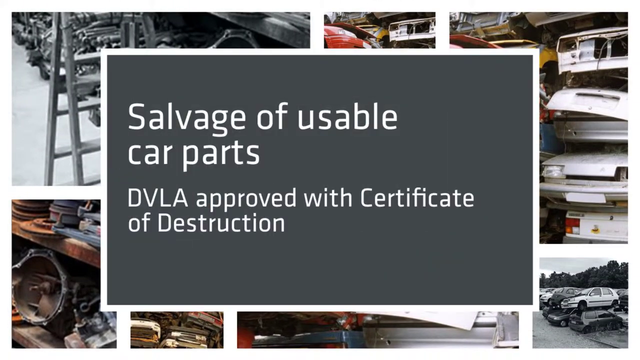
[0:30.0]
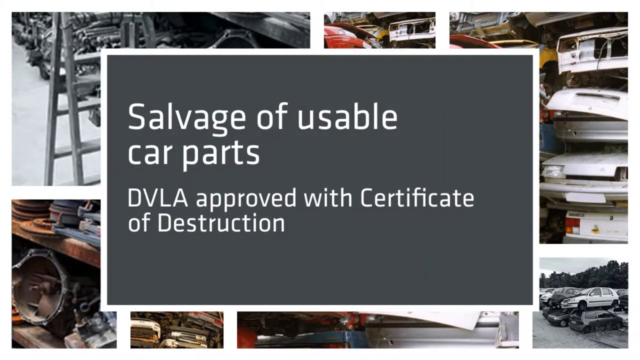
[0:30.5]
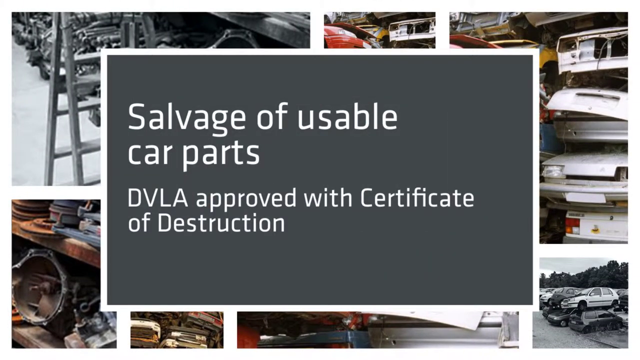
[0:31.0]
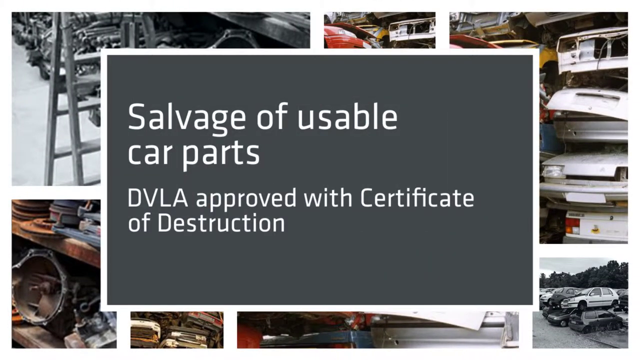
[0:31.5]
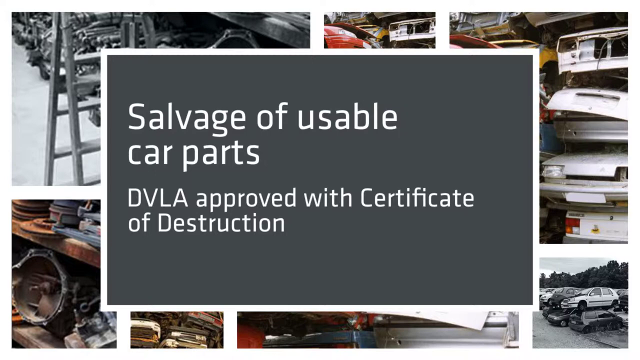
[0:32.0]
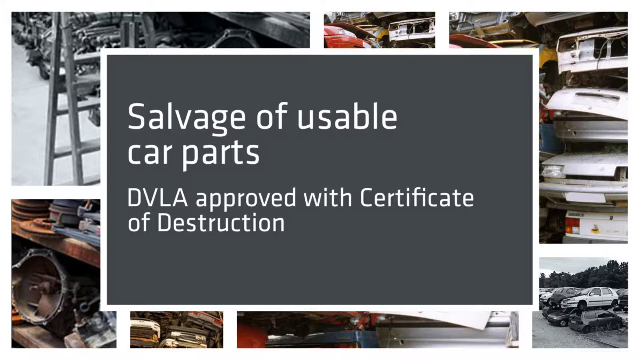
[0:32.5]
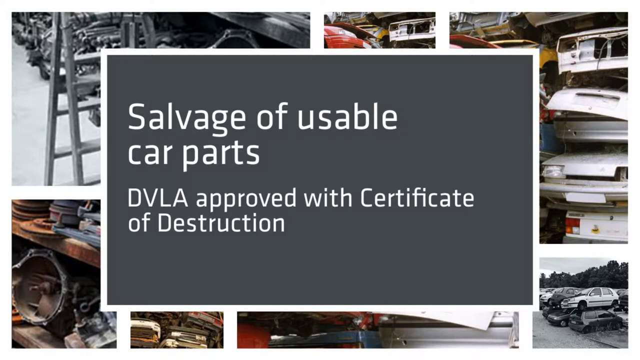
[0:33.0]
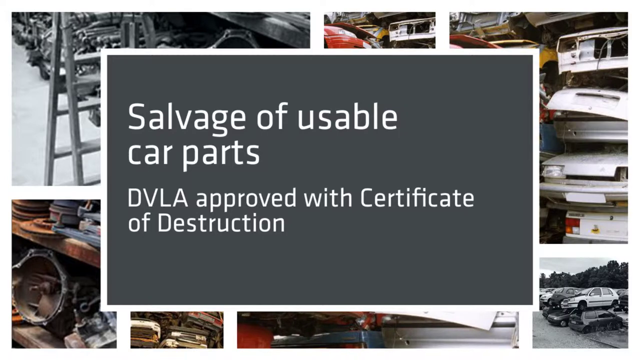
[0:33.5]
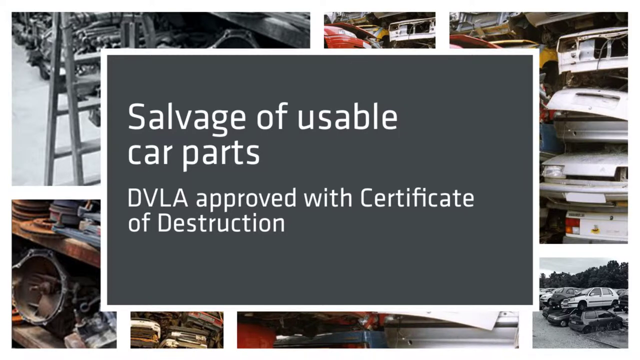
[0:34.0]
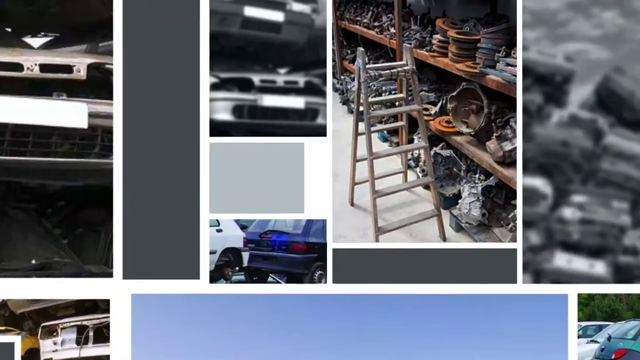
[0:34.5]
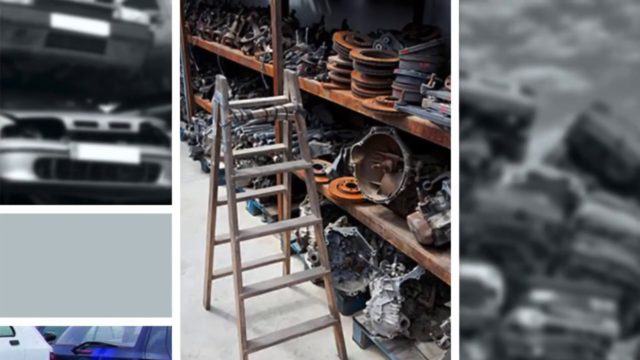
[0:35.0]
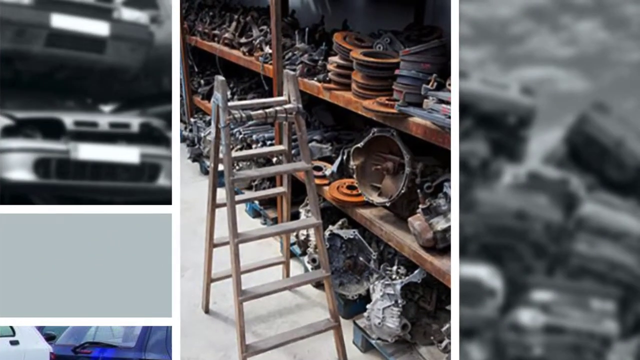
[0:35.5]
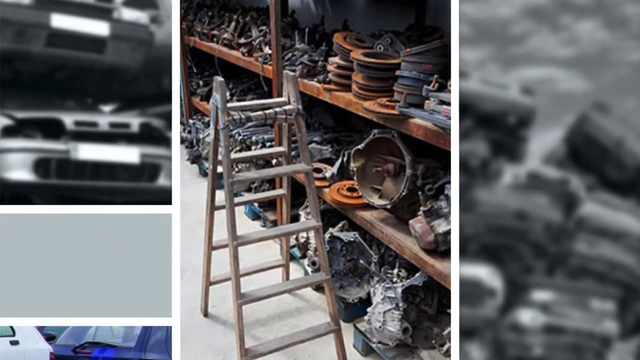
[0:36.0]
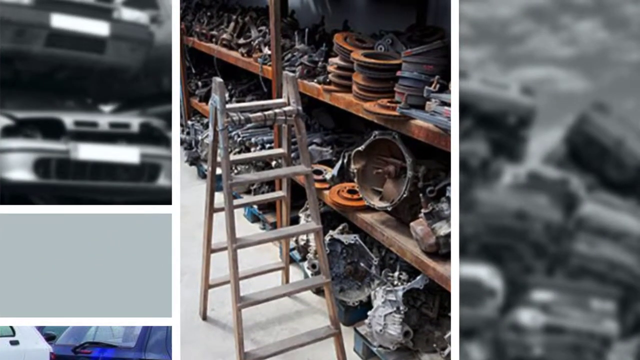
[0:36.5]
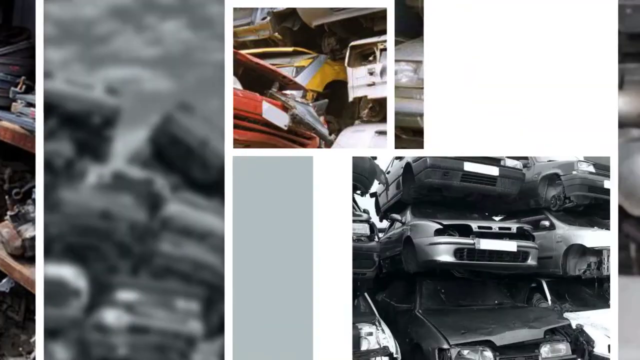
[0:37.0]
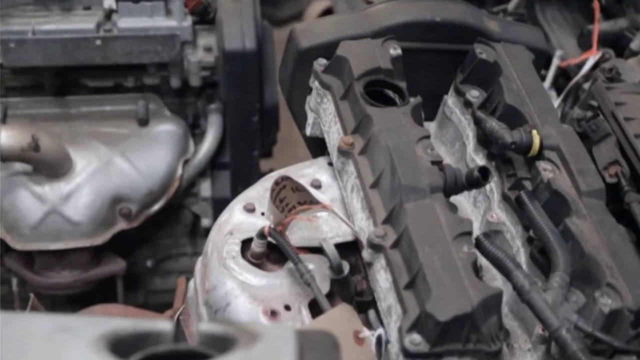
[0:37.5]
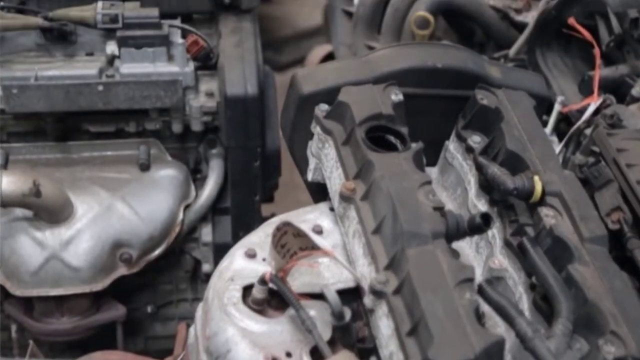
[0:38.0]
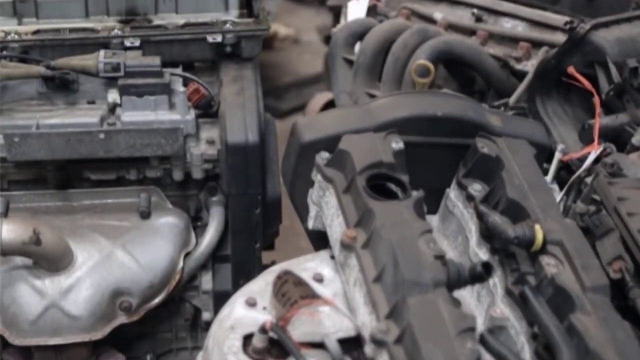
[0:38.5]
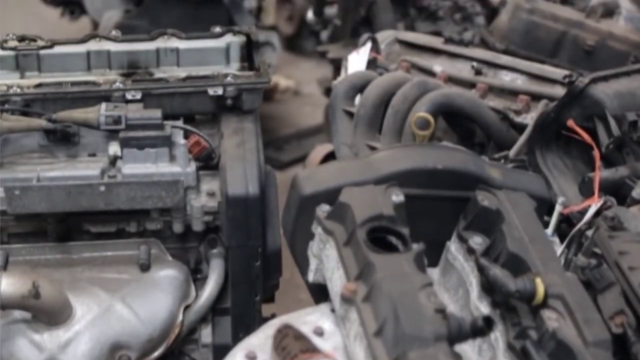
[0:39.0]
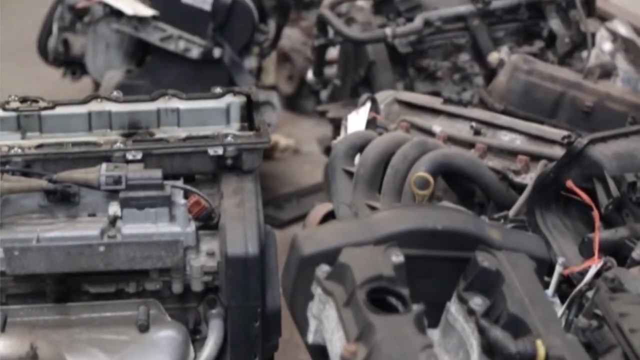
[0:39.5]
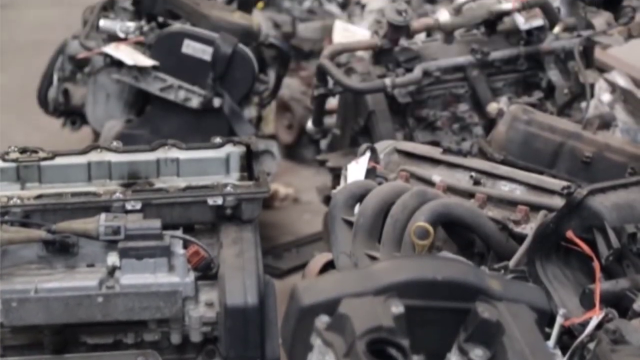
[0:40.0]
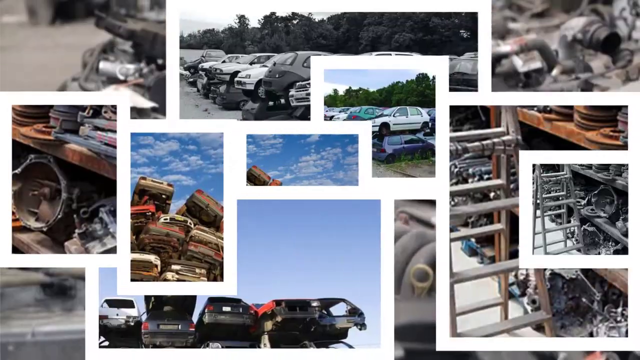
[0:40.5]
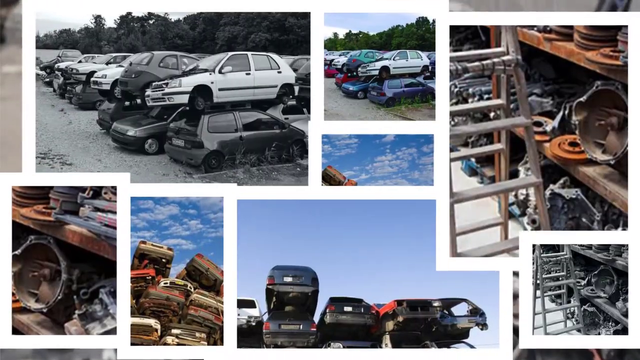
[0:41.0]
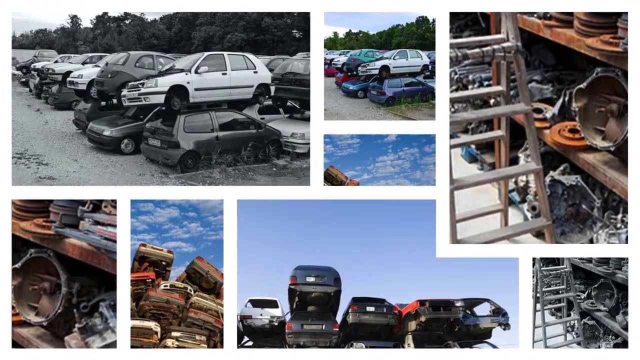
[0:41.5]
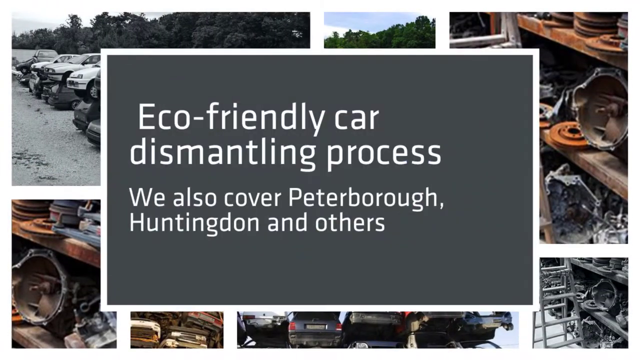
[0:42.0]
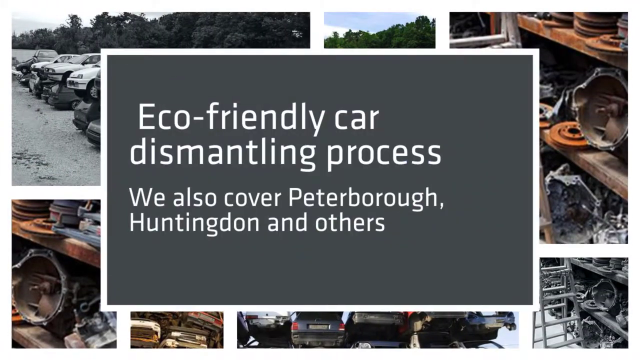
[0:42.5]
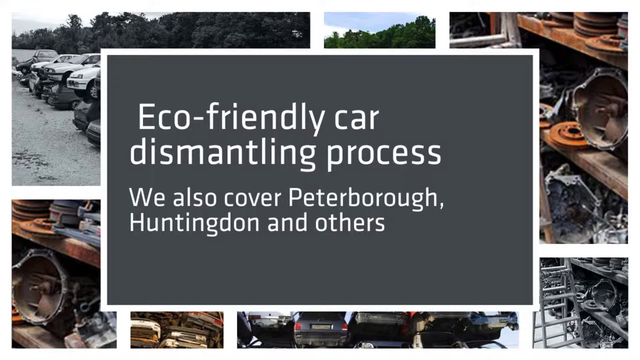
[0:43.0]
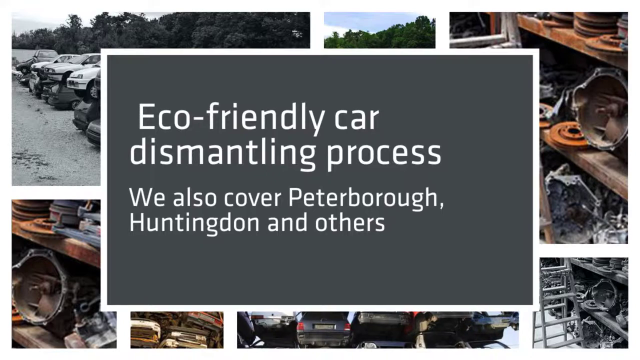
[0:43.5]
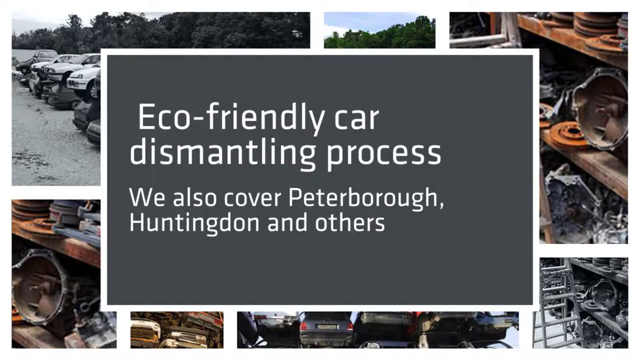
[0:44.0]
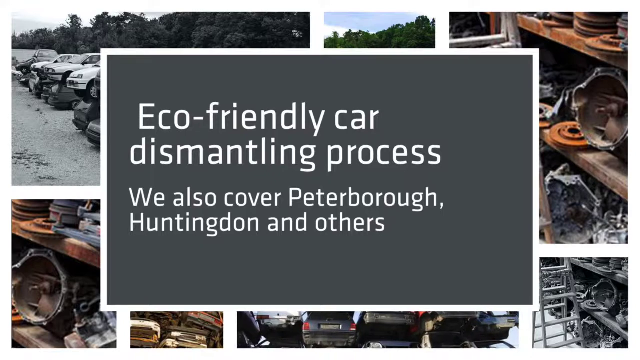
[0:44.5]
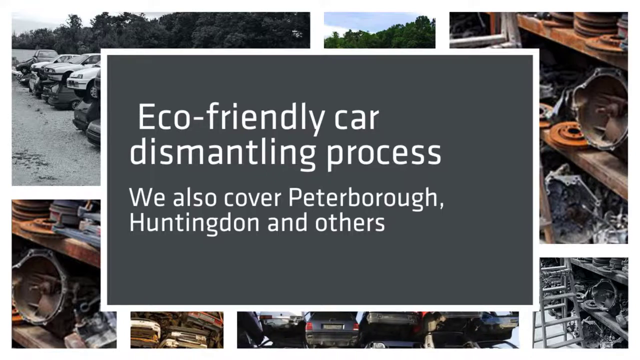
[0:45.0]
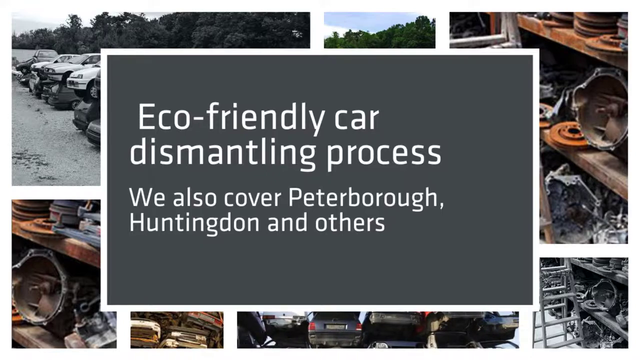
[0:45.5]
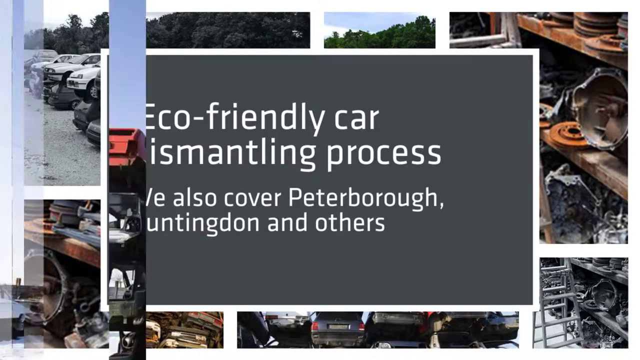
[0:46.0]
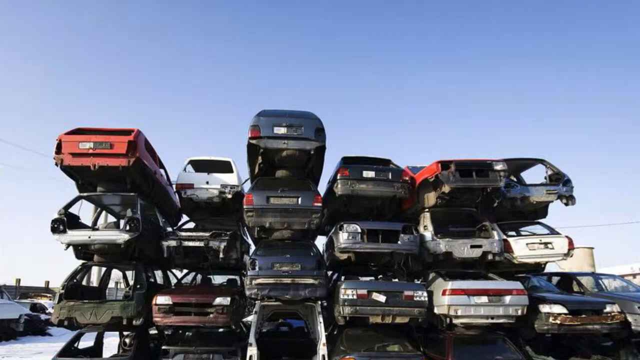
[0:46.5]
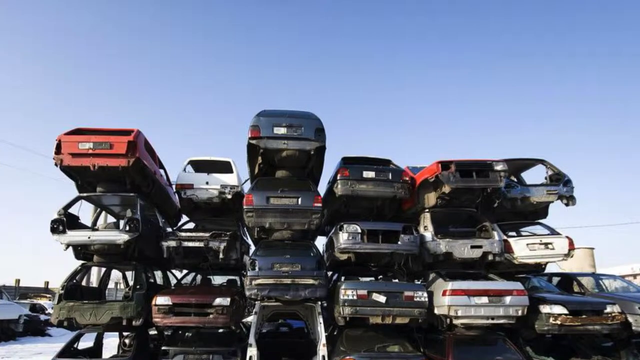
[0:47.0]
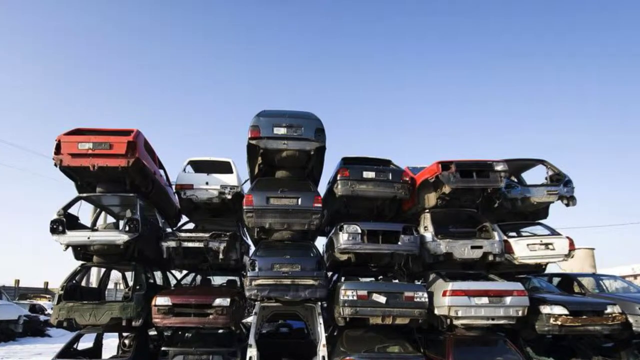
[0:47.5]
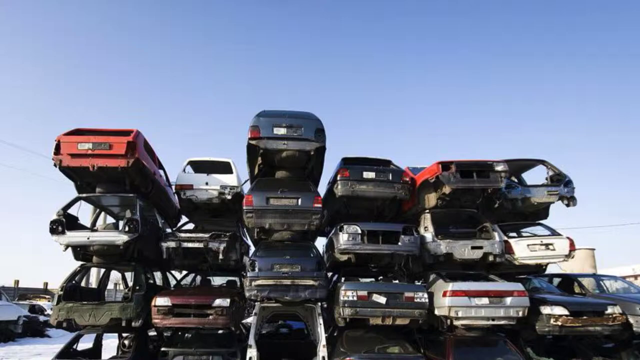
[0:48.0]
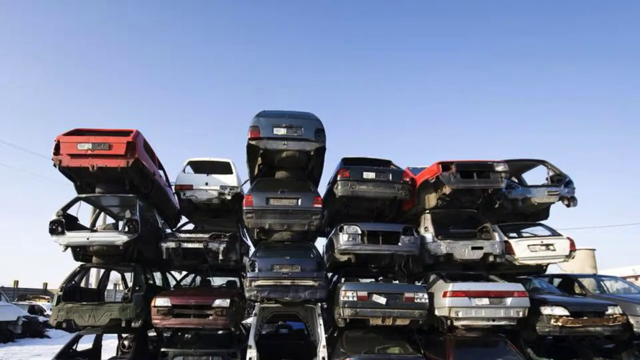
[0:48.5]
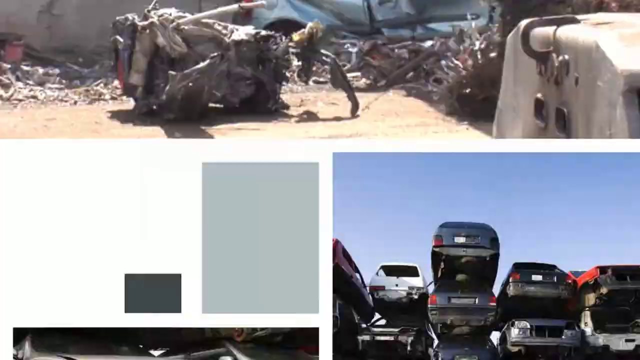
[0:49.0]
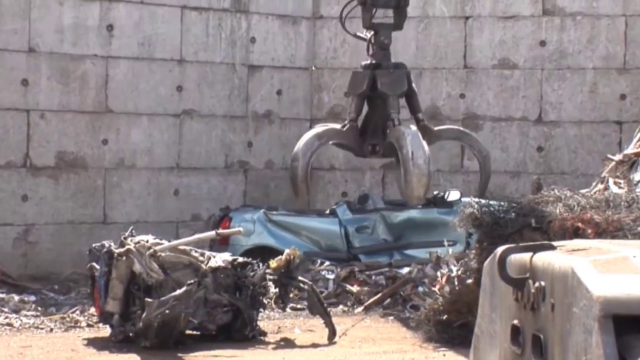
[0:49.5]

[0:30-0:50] Wording on screen says "DVLA approved with certificate of destruction," in white on a gray background. The scene then moves inside a warehouse with a little ladder, where all kinds of auto parts taken from vehicles are stacked up on shelves. Another sign pops up that says "eco friendly car dismantling process," along with "we also cover Peterborough, Huntingdon, and others." Outside, cars are stacked up on top of each other, and a crane comes in and picks up some of the metal and parts that came from the cars. Some of the pictures are in black and white and some are in color, showing many white cars as well as yellow, red and blue cars.